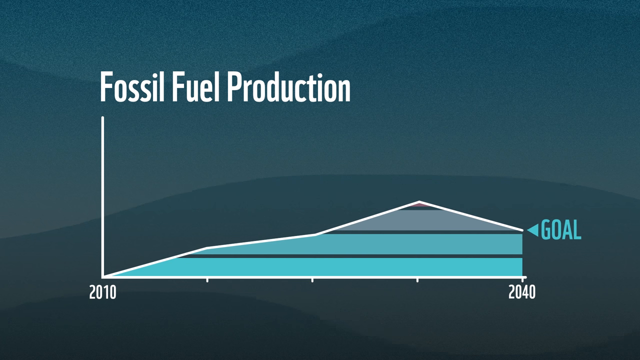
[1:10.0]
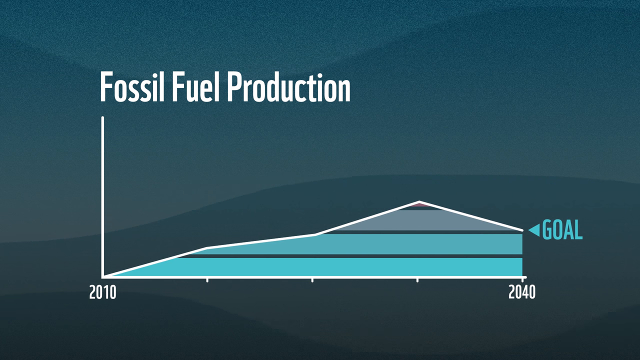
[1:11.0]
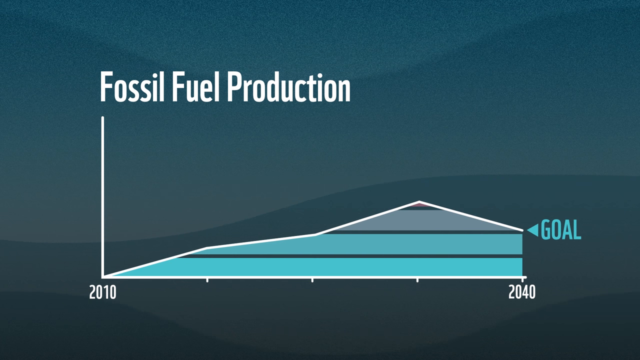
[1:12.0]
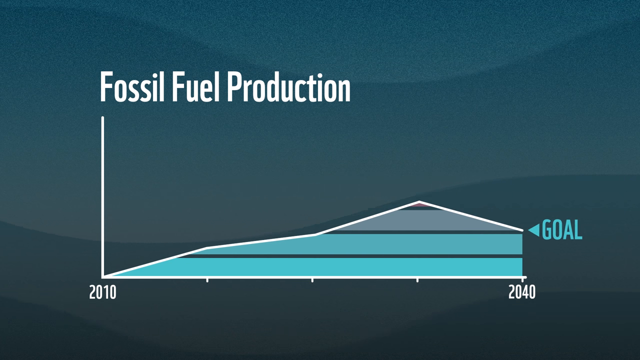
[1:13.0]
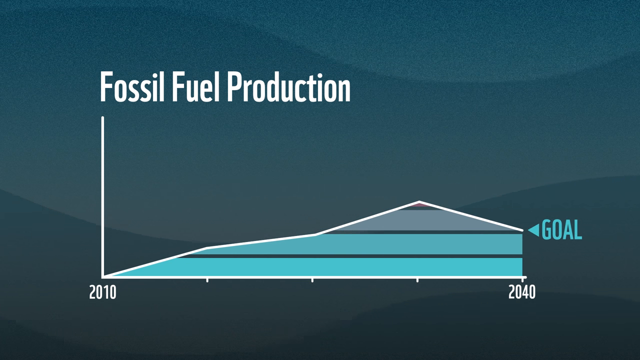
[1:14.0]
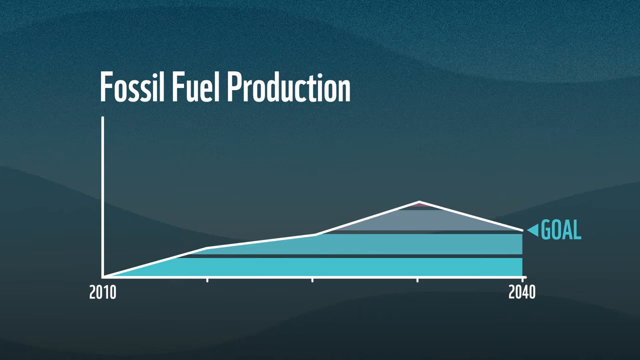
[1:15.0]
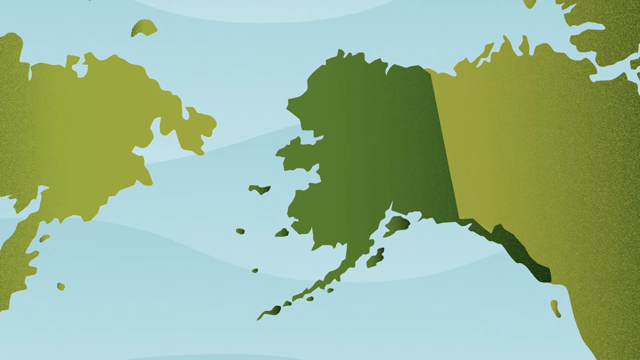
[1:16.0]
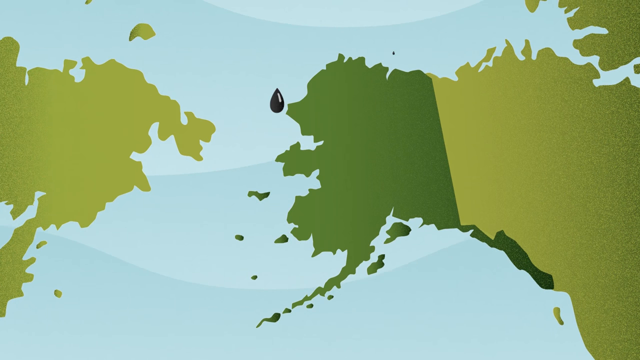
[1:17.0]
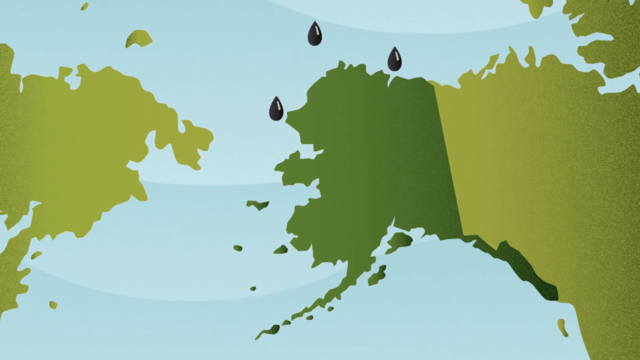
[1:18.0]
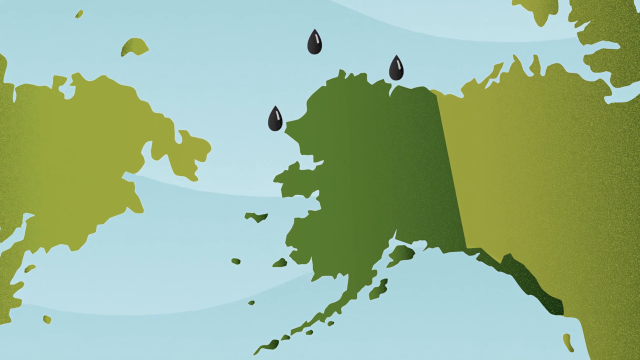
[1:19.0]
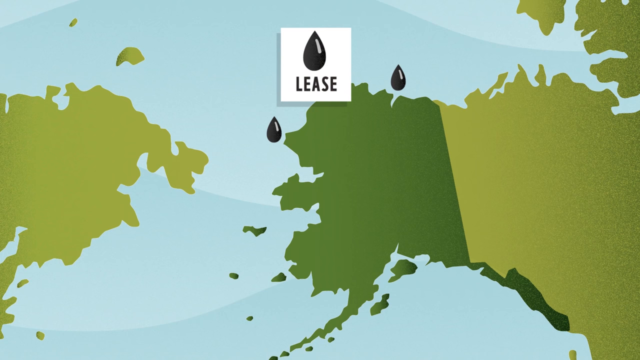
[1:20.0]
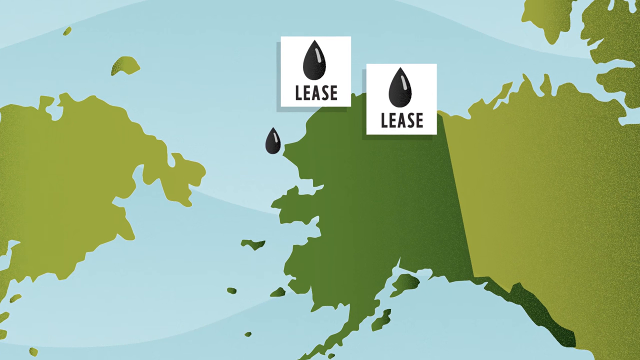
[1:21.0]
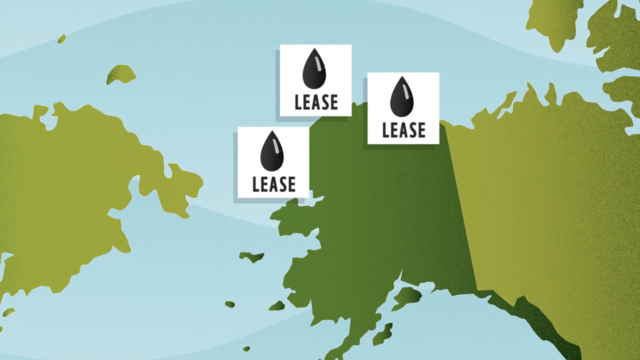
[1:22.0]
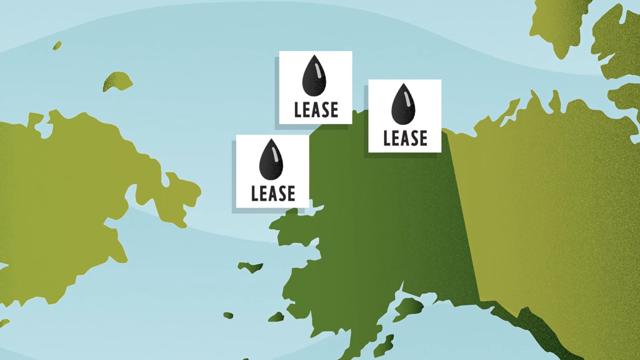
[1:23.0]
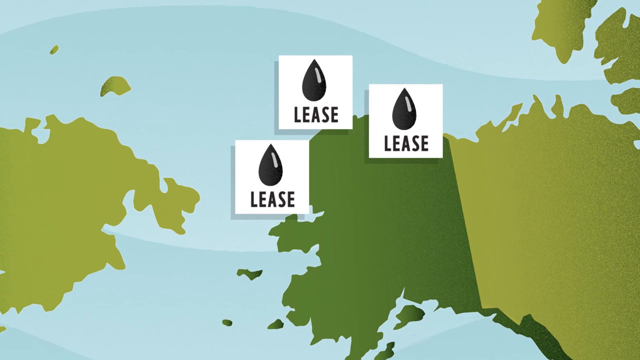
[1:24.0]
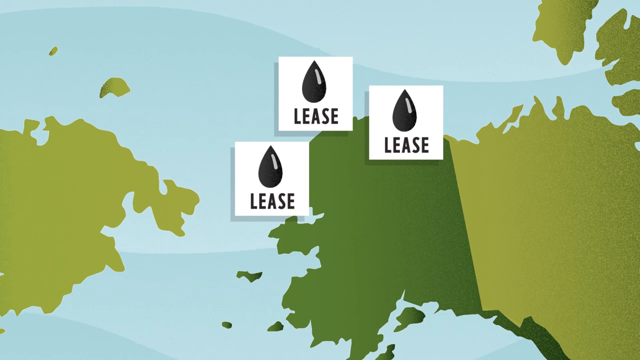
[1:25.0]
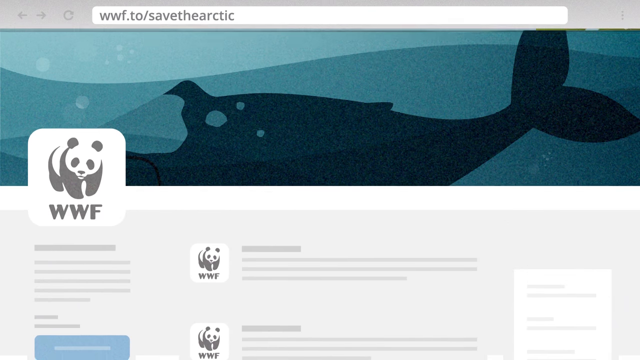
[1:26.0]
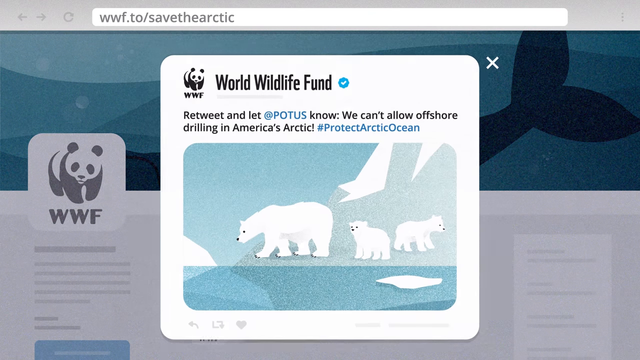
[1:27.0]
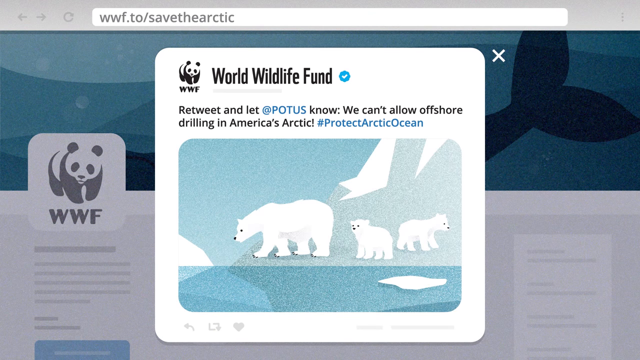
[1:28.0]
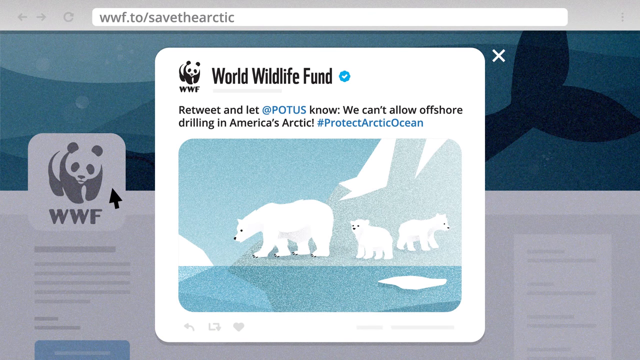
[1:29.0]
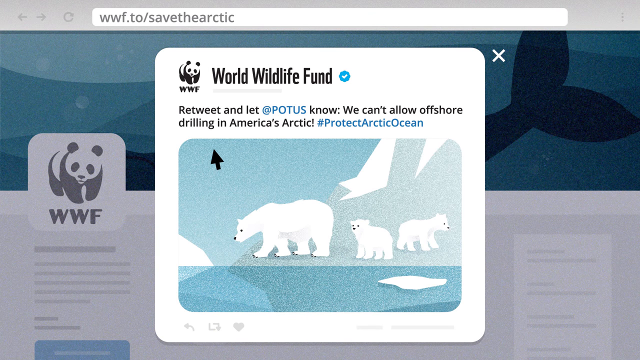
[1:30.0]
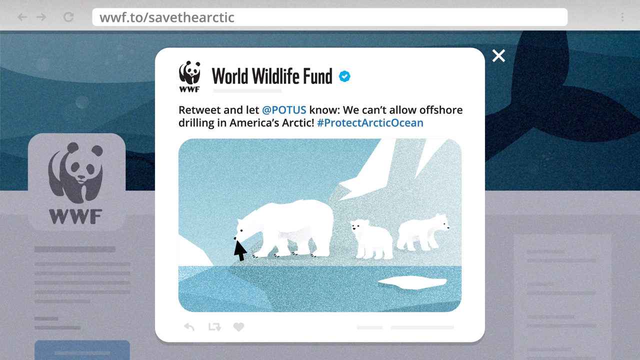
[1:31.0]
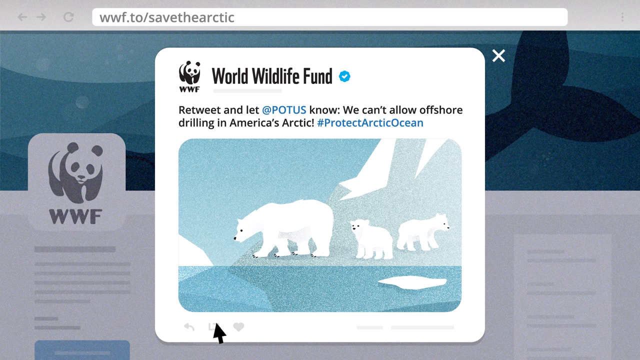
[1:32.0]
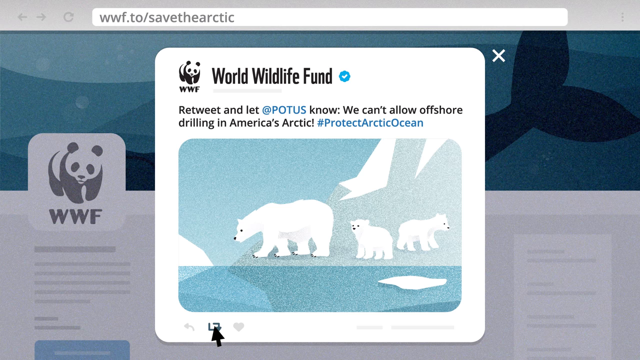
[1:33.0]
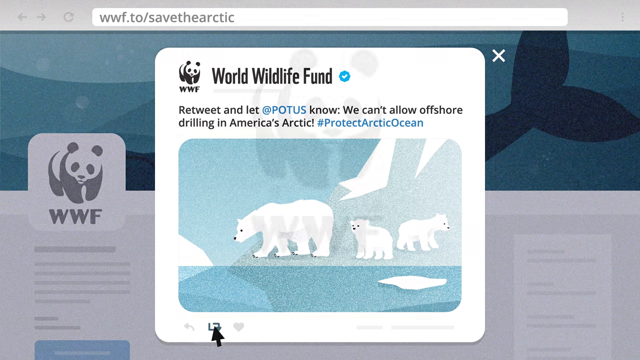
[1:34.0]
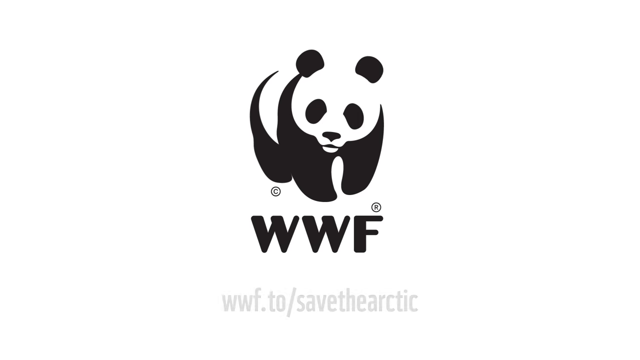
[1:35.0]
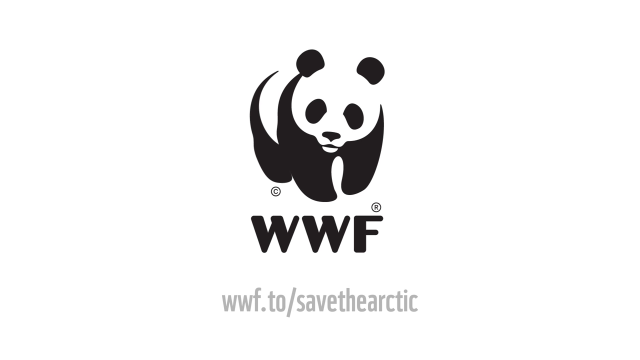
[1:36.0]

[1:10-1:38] The graph labeled "fossil fuel production" is shown. On the left-hand side, the vertical axis begins at the year 2010 and goes straight up, and the horizontal axis across the bottom runs in segments from 2010 to 2040. The upward arrow trend goes all the way to 2030, and at 2030 it begins to subside, with the goal being back down below 2010 levels. The video then moves back to the aerial view of Russia, Alaska and Western Canada against the ocean. Three superimposed black drops appear, one under each, and the word "lease" is shown. As the camera pans closer to them, the background image is of an orca trying to swim through the ocean. The World Wildlife Fund logo comes up with the text "Retweet and let @POTUS know. We can't allow offshore drilling in America's Arctic. #protect Arctic Ocean". The image is of a mother polar bear and her two cubs standing at the water's edge. The water is blue, the ice floe they are standing on is gray and white, and the sky behind them is blue.